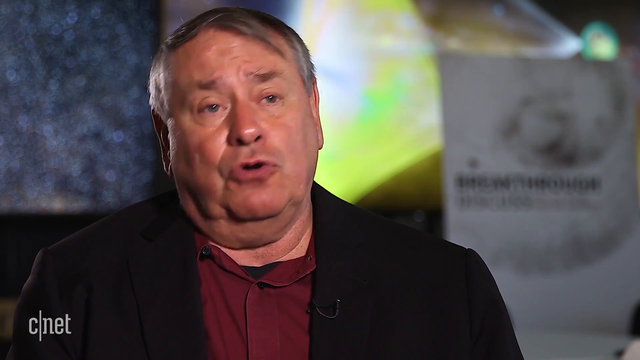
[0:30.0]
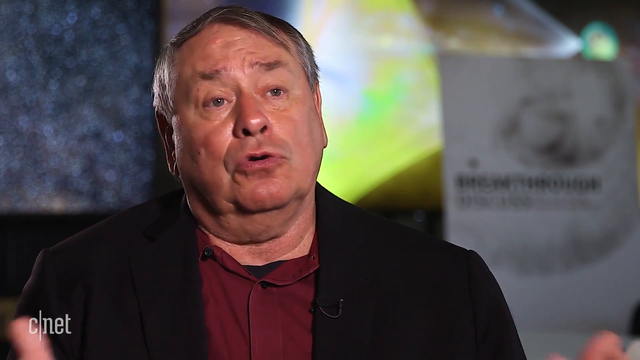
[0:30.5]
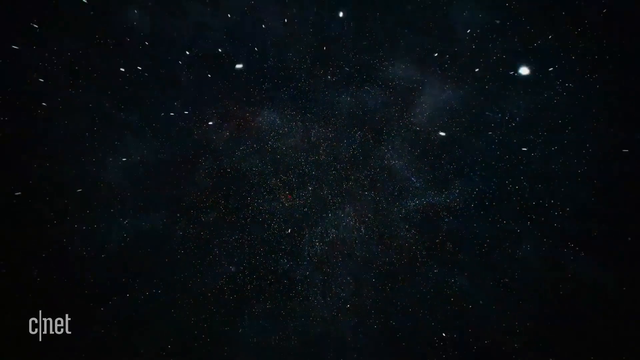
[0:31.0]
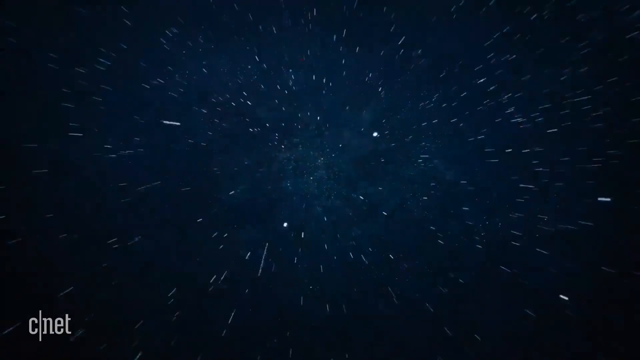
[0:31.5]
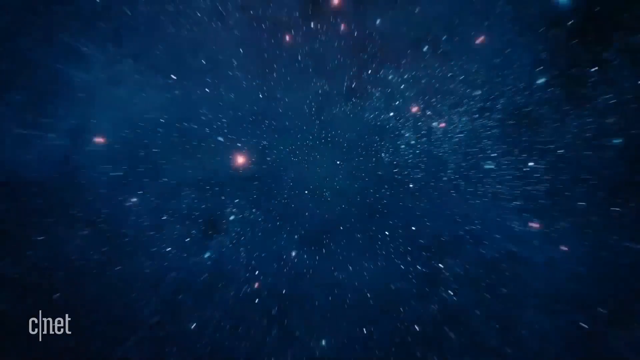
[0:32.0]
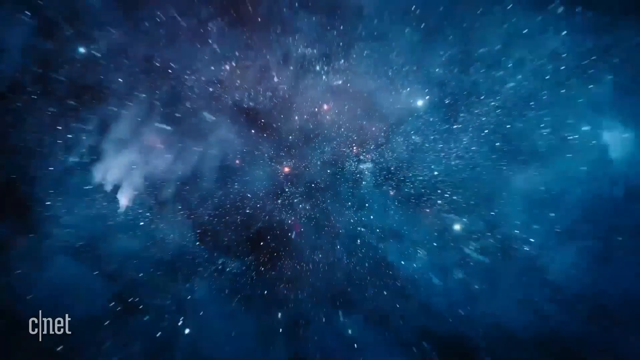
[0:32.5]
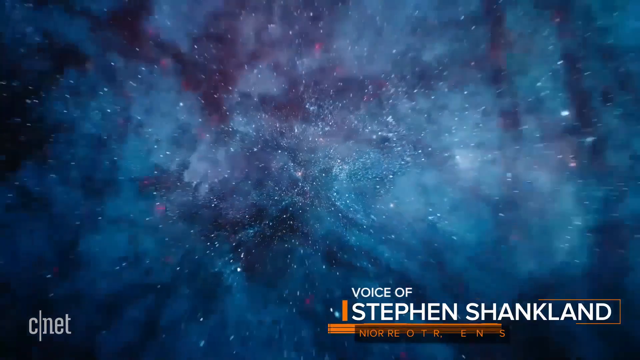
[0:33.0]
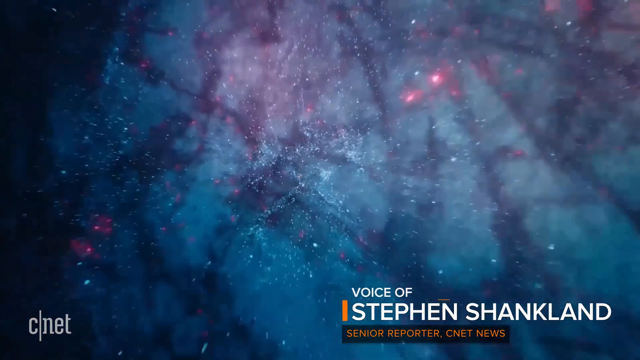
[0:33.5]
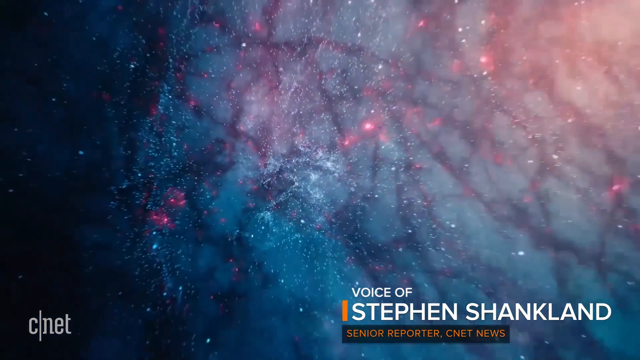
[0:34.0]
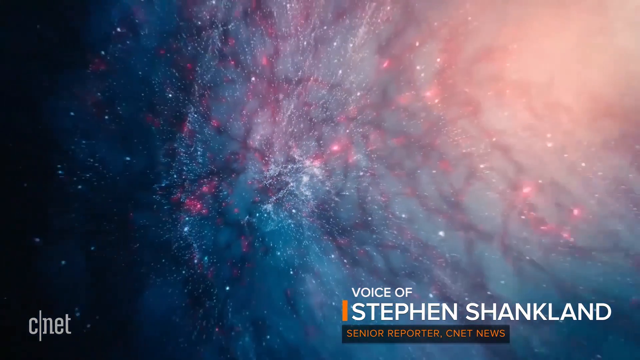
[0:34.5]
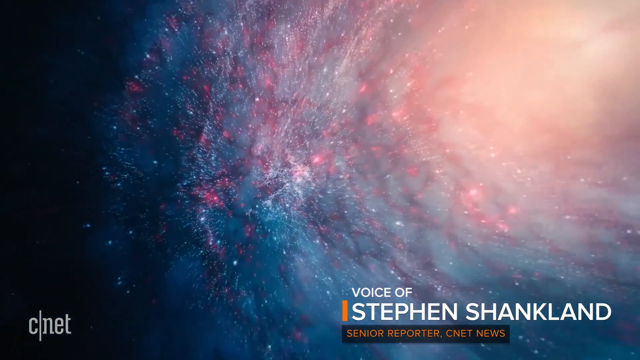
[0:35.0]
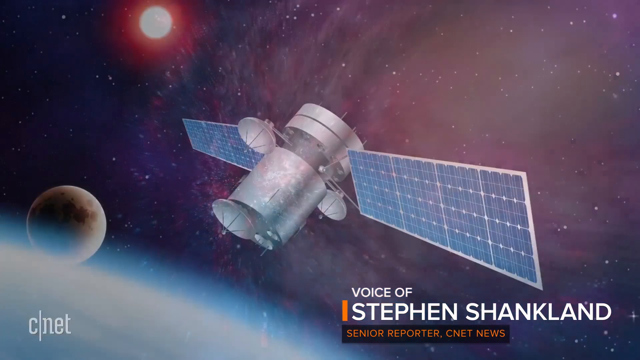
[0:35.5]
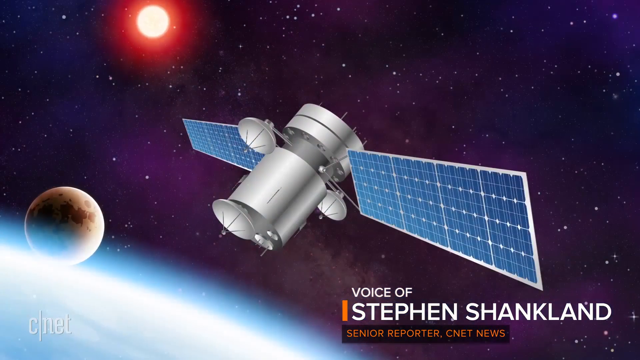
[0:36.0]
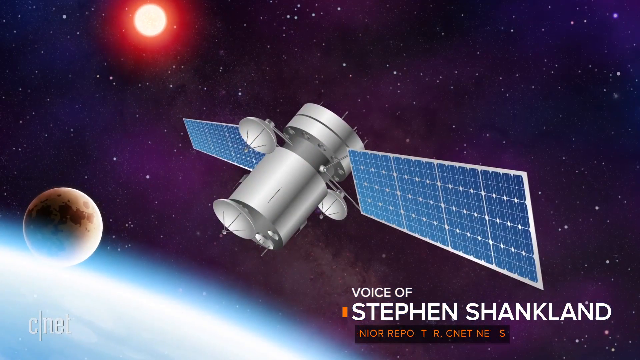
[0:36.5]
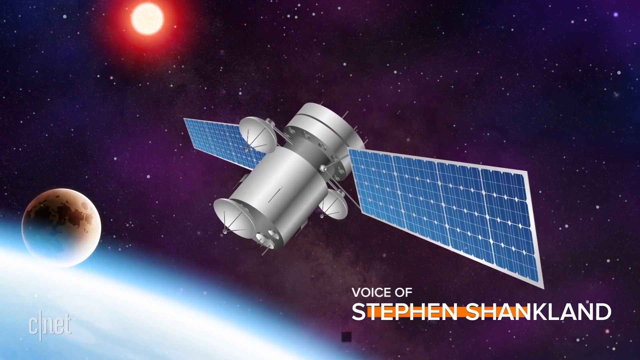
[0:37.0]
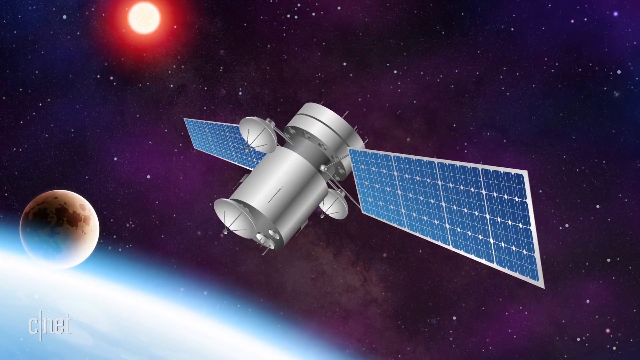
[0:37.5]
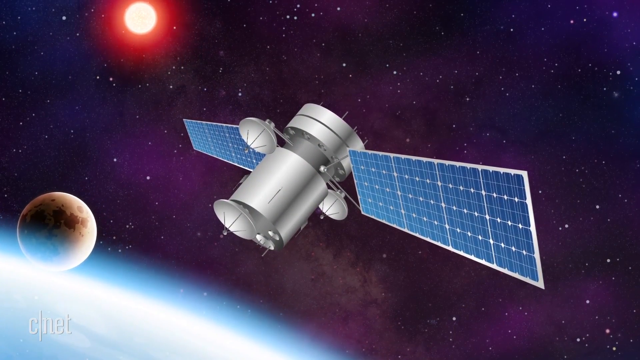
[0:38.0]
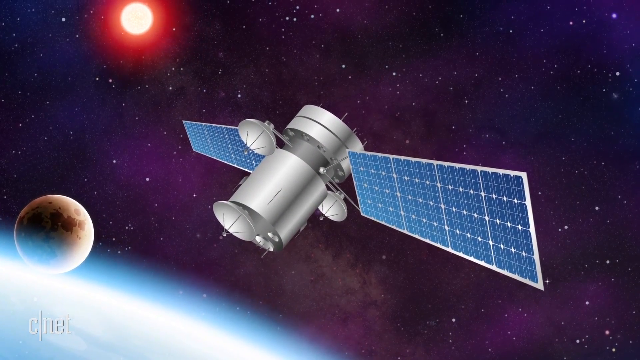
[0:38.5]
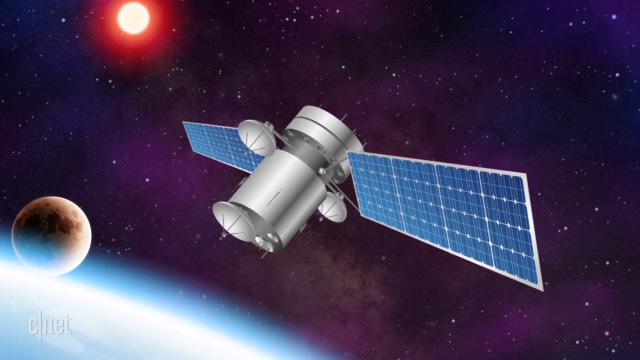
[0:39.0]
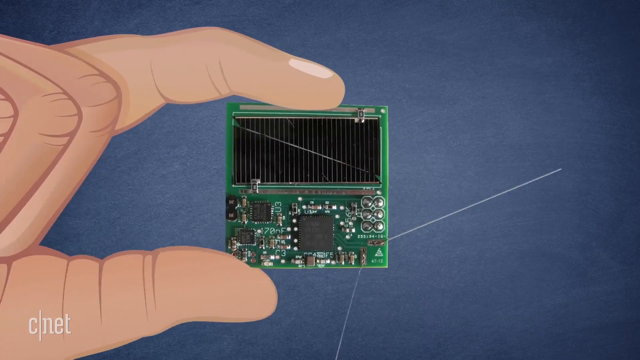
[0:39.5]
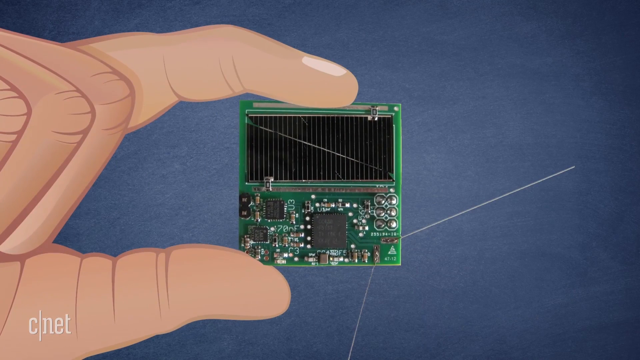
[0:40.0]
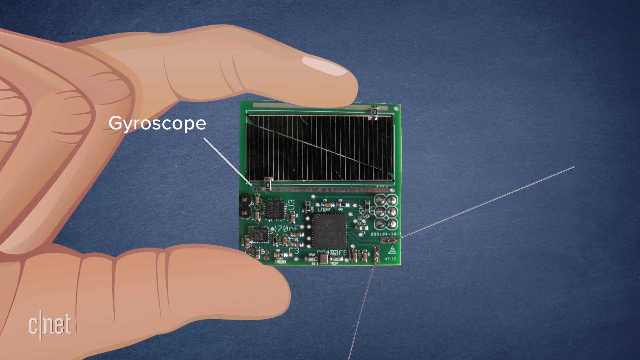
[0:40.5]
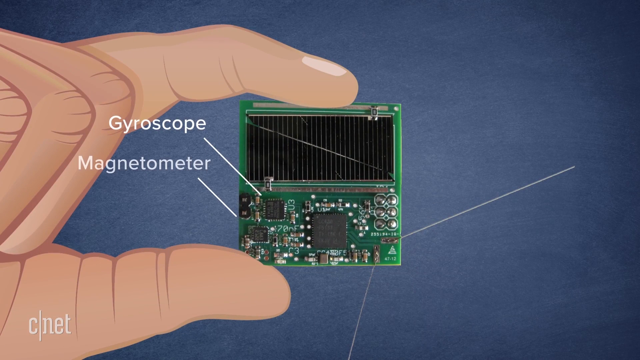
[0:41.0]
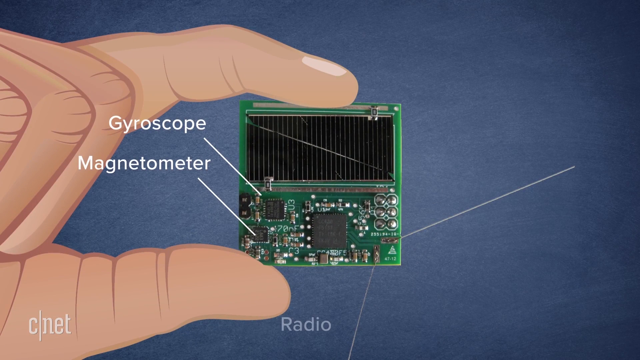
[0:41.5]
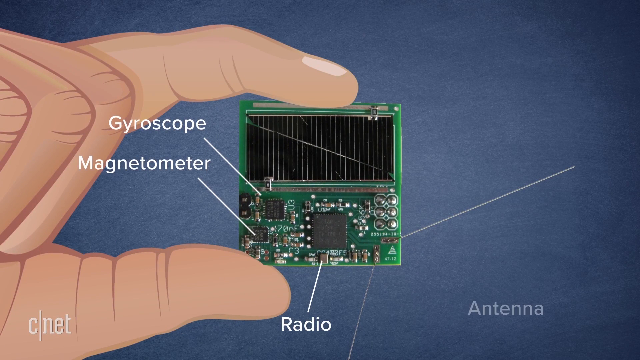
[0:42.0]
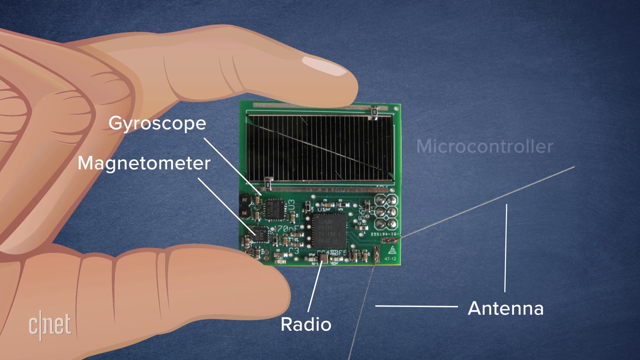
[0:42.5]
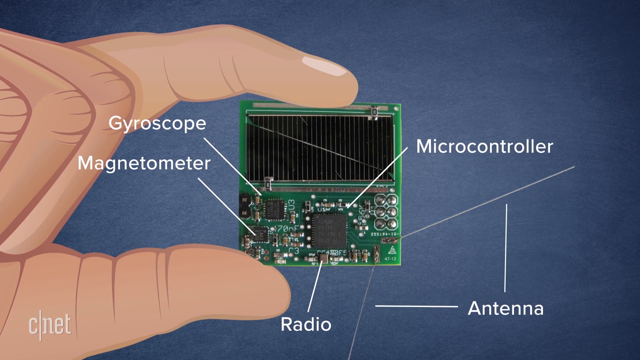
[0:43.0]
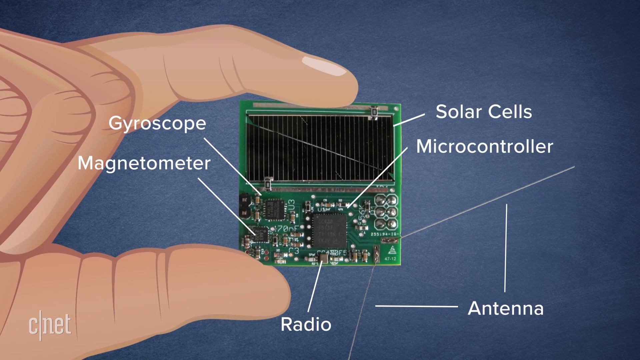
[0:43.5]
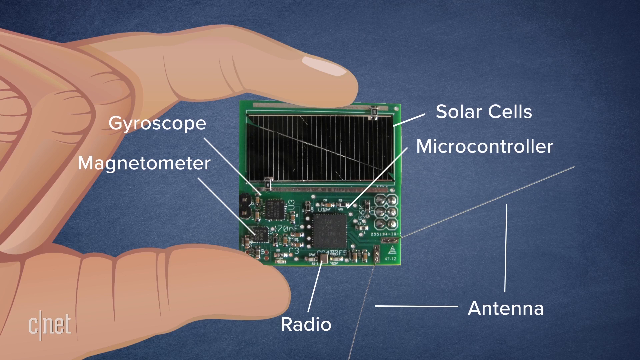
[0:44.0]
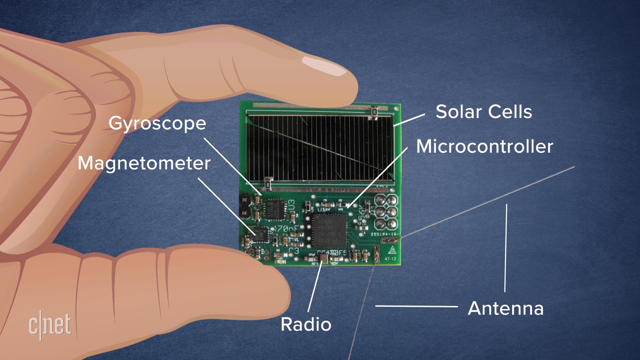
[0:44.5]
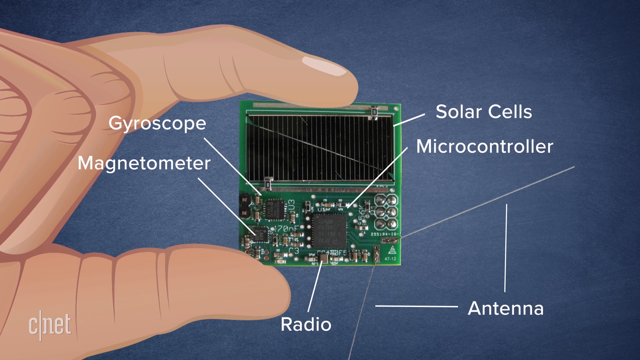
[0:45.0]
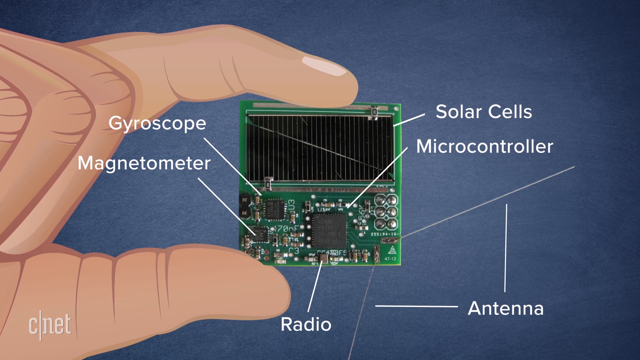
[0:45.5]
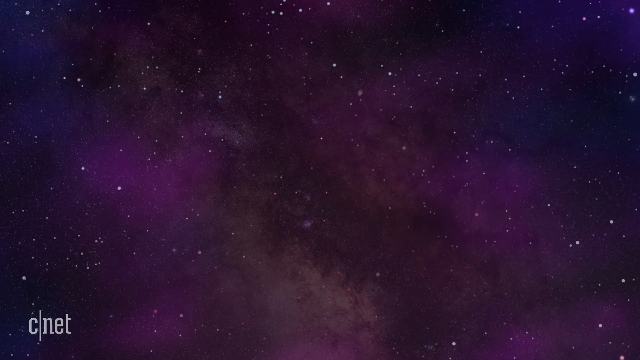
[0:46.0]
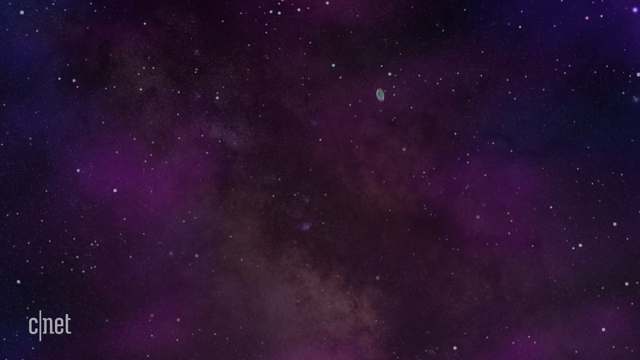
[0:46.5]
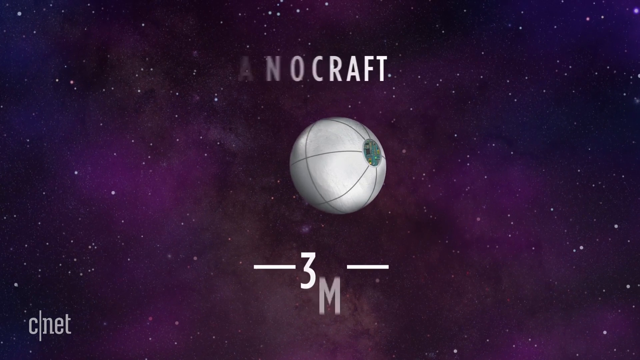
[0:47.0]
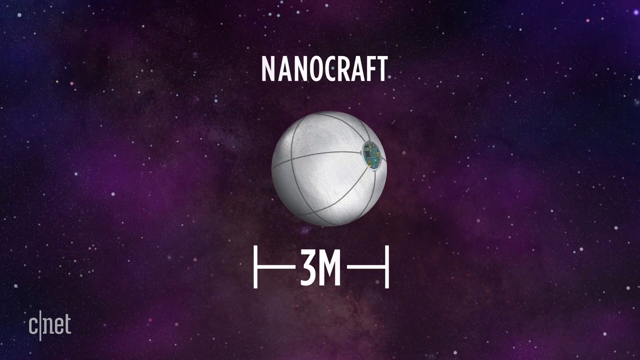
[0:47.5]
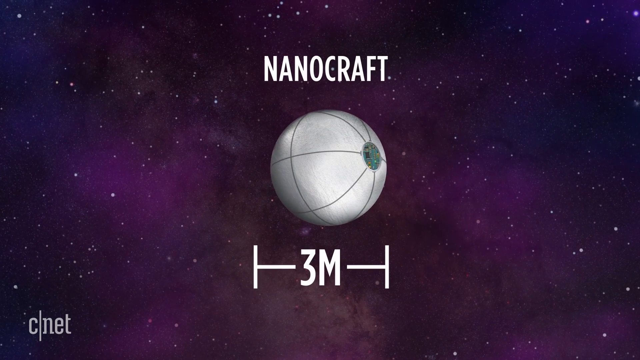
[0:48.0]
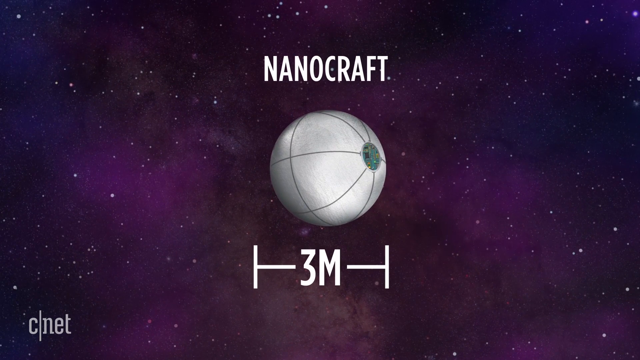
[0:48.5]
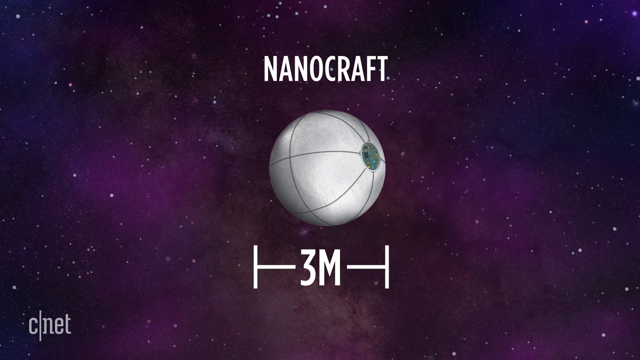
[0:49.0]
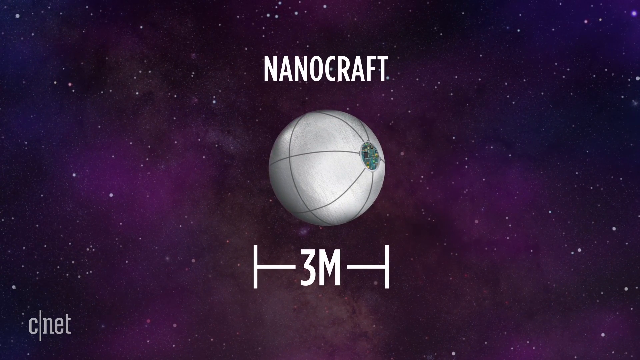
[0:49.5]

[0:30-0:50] Pete Ward talks in an interview style, speaking to someone, with a CNET logo in the bottom left. The video transitions to a space or galaxy animation that zooms out of a galaxy, showing many circle patterns and stars scattered all over. At the bottom right, text reads "Voice of Stephen Shanklin." A view shows a satellite hovering above the Earth, and then a chip is held in someone's left hand. The chip is square and green, and various parts of it are pointed out, such as the gyroscope, the magnetometer, the solar cells, and the microcontroller.